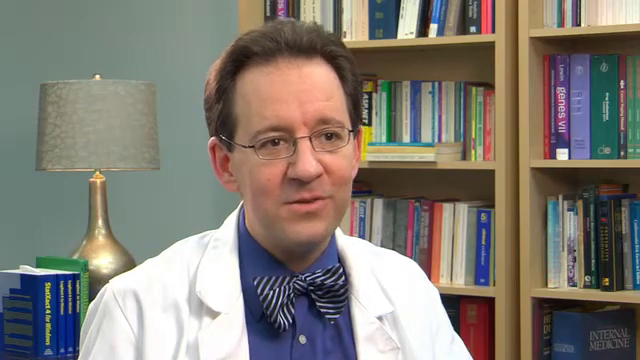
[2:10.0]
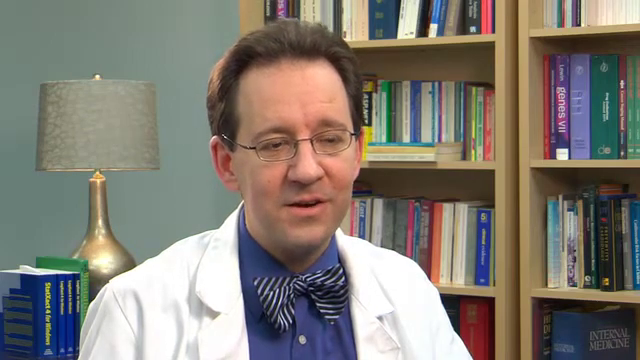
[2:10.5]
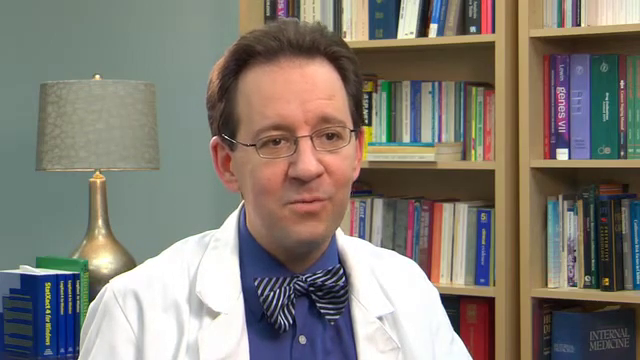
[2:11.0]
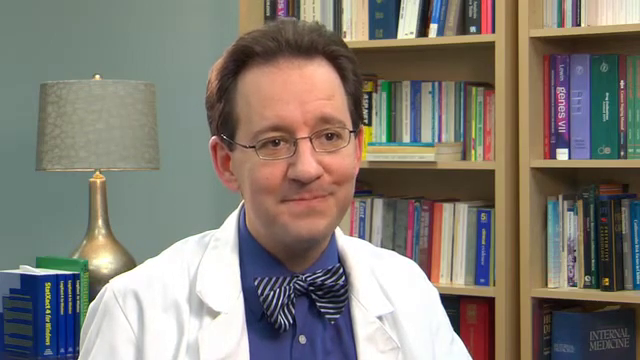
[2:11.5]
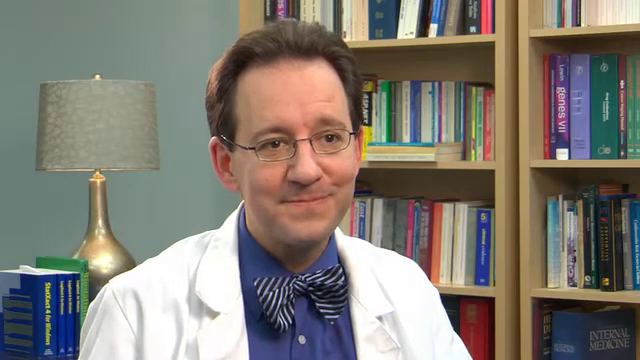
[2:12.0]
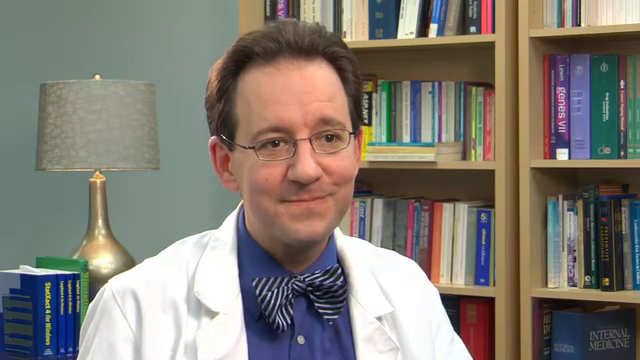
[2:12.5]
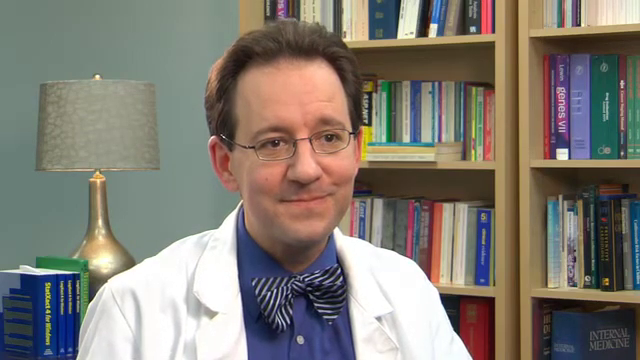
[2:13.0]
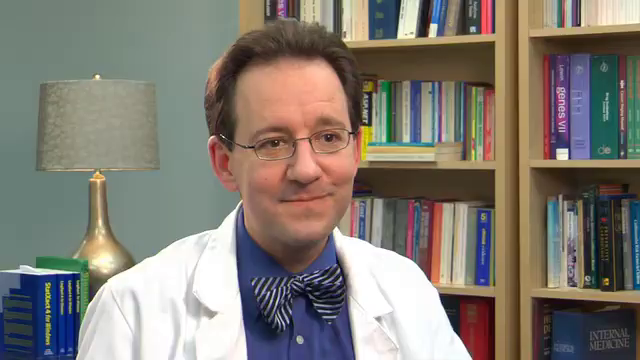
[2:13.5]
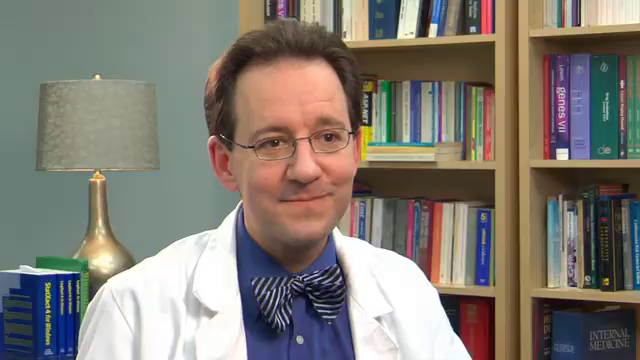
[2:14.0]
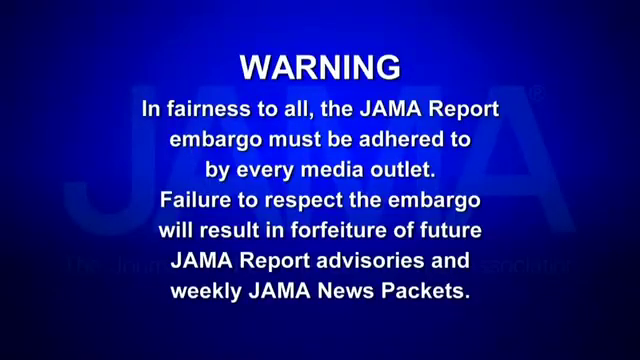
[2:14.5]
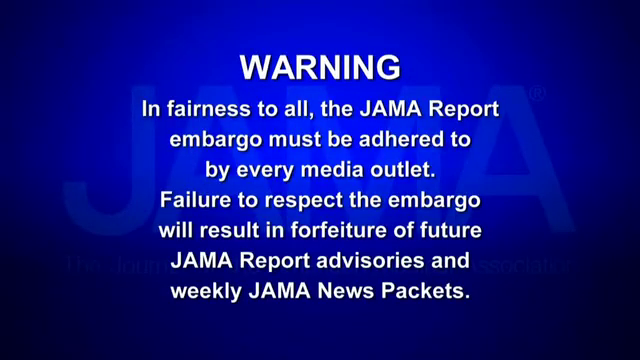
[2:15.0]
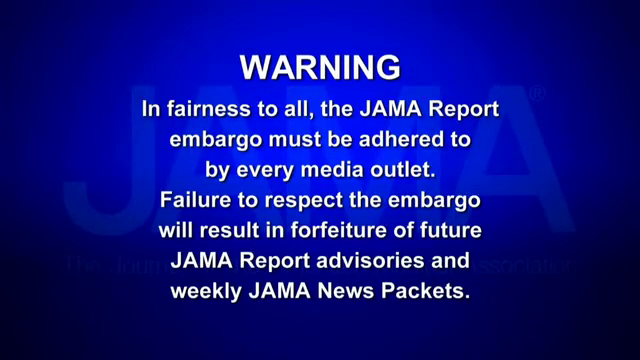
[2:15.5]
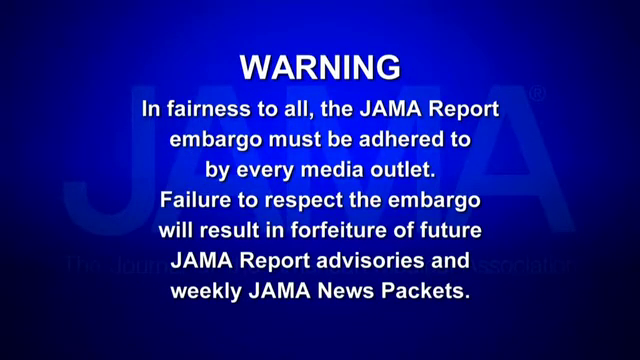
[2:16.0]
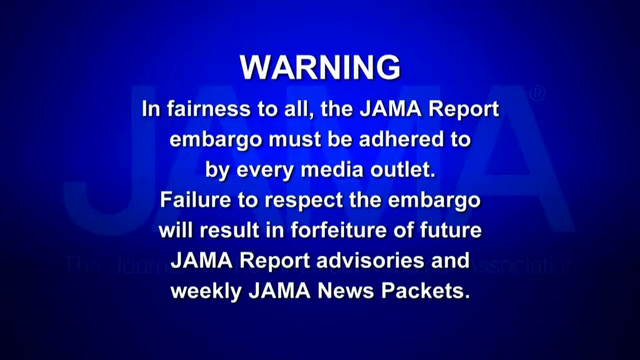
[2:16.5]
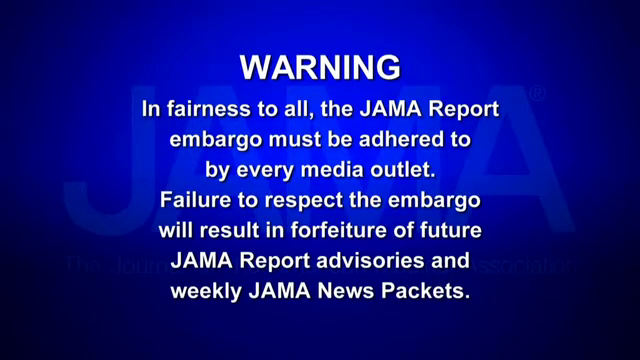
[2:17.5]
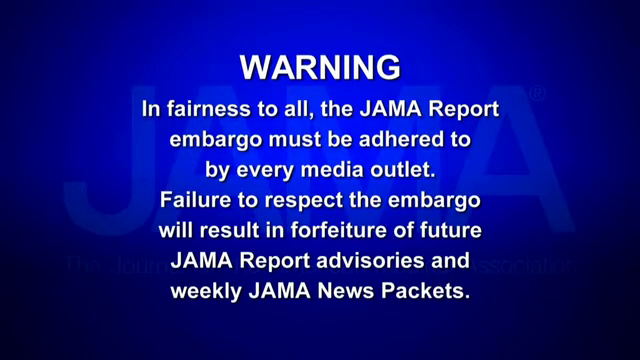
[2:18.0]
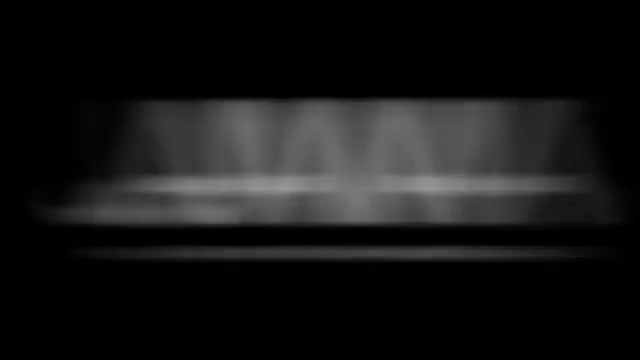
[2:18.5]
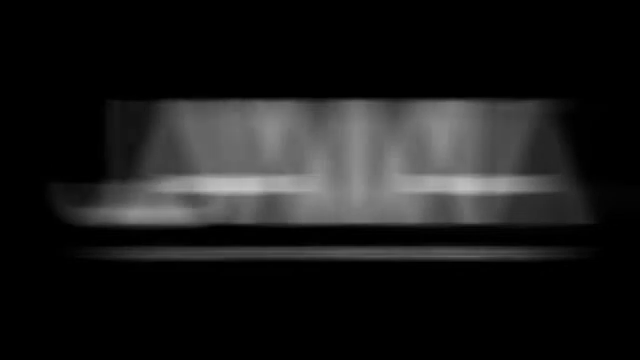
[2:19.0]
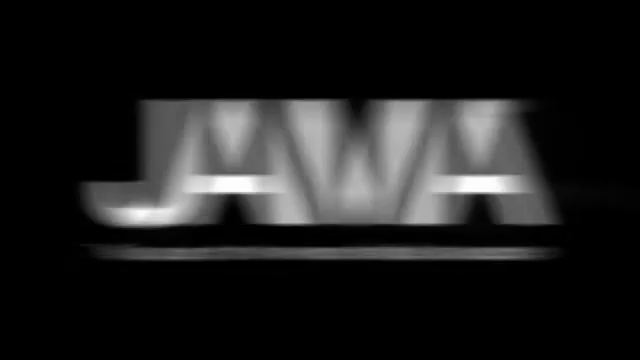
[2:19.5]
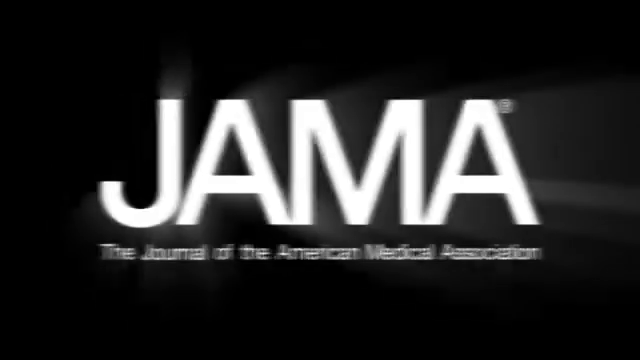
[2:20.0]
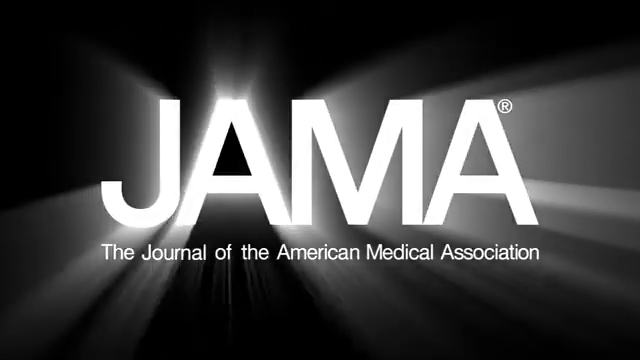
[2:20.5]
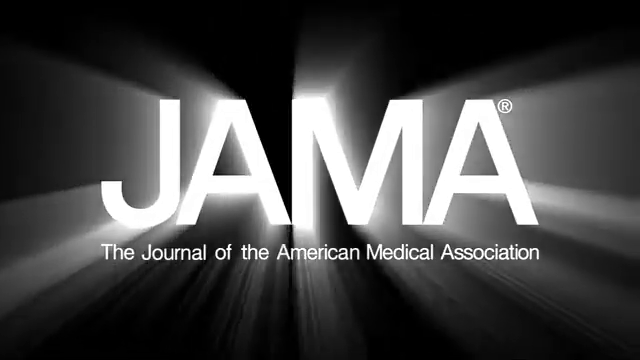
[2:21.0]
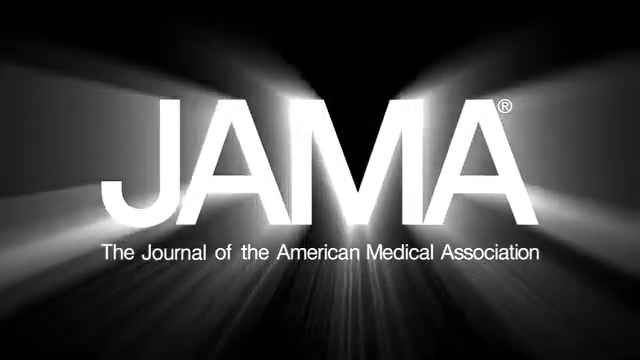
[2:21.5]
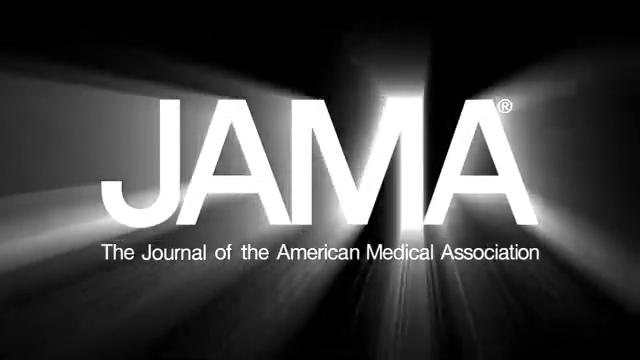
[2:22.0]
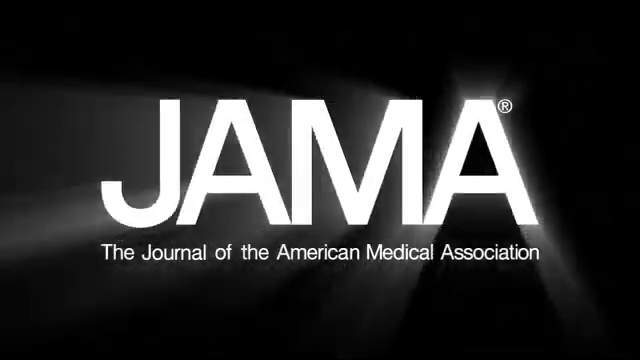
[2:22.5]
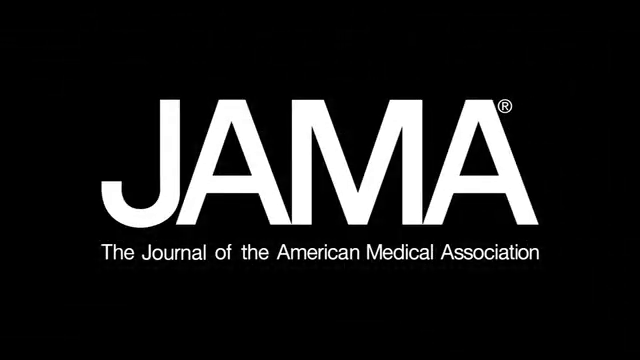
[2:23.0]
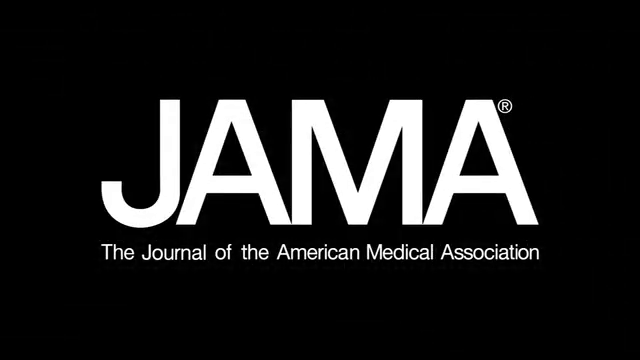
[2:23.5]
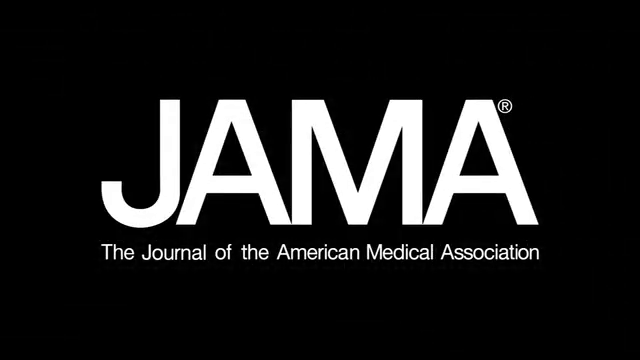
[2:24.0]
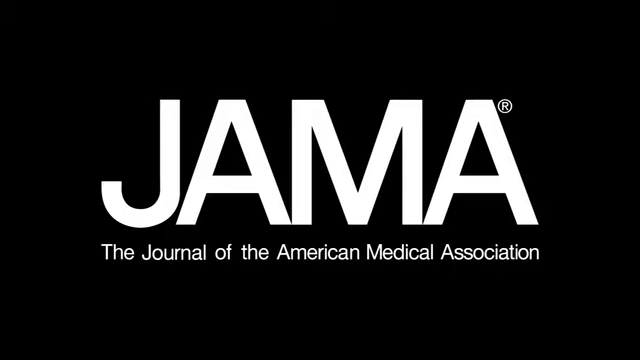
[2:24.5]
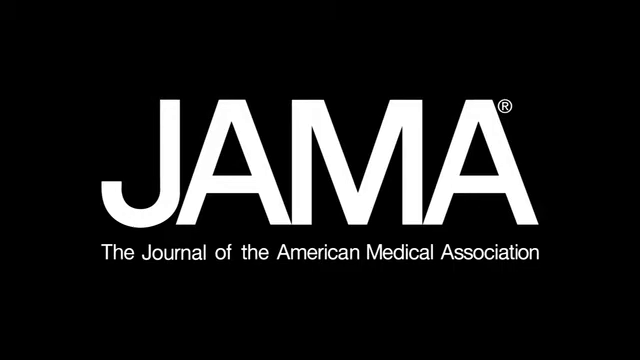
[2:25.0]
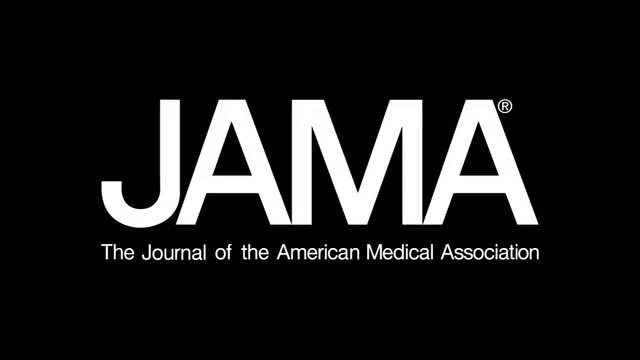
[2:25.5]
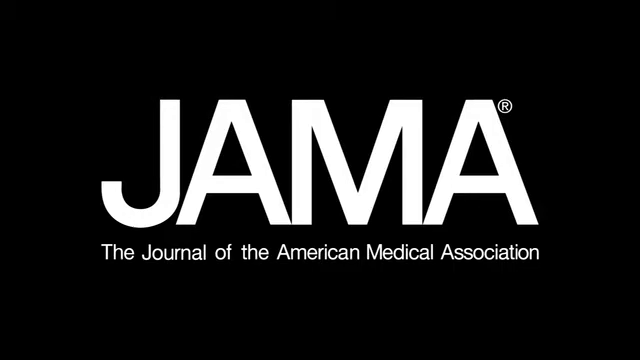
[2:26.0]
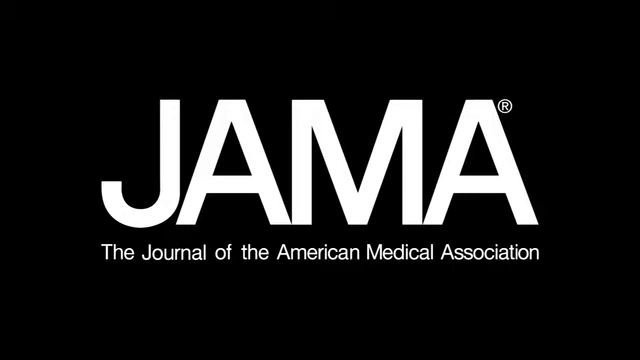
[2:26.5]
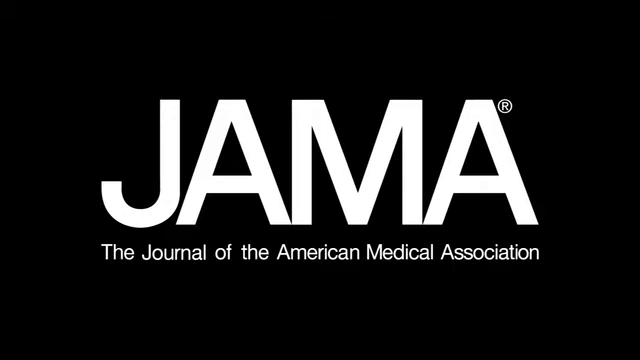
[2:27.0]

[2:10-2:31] The doctor is back in his office, still being interviewed. He keeps talking with a very authoritative look and a little smile, almost a little smirk, on his face, and shakes his head slightly from left to right as he speaks. Next, a royal blue screen shows words written in white in the middle of the screen: "warning. In fairness to all, the JAMA report embargo must be adhered to by every media outlet. Failure to respect the embargo will result in forfeiture of future JAMA report advisories and weekly JAMA news packets." Next, on a black background, the word "JAMA" moves into the screen. It is a bit blurry and then clears up, written in white, and looks like it is glowing, lit up in white with white shadows all around it. Beneath it, the words "the Journal of the American Medical Association" are written in white.